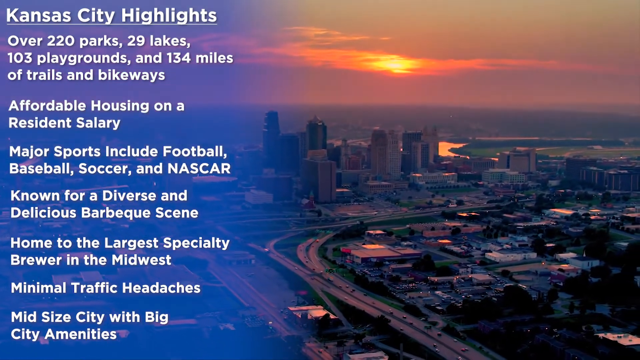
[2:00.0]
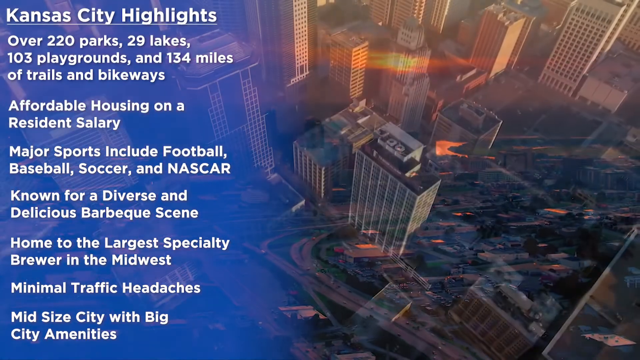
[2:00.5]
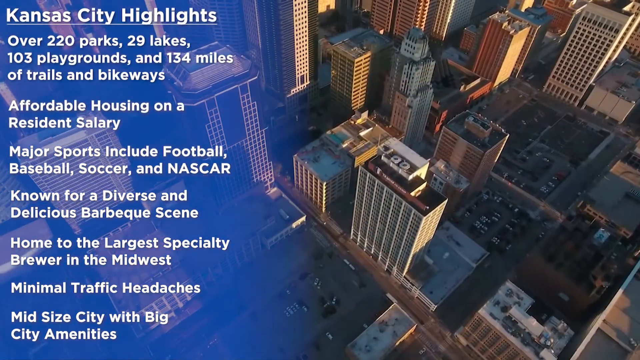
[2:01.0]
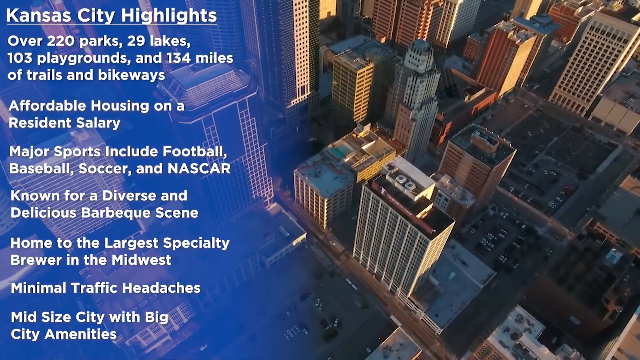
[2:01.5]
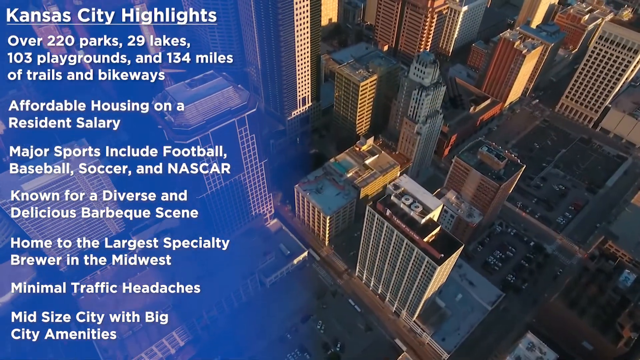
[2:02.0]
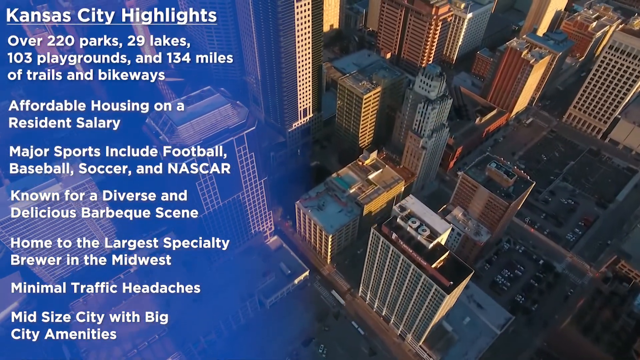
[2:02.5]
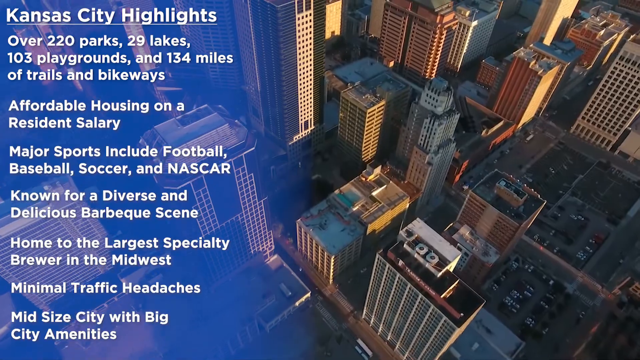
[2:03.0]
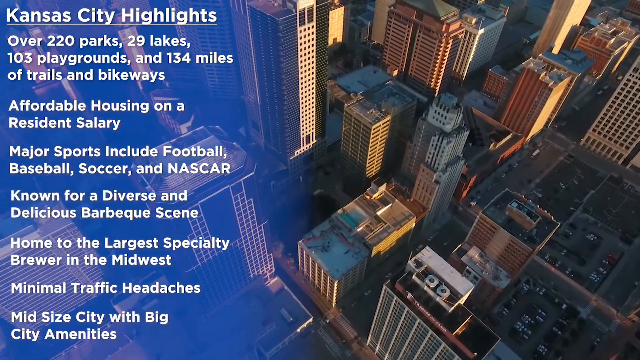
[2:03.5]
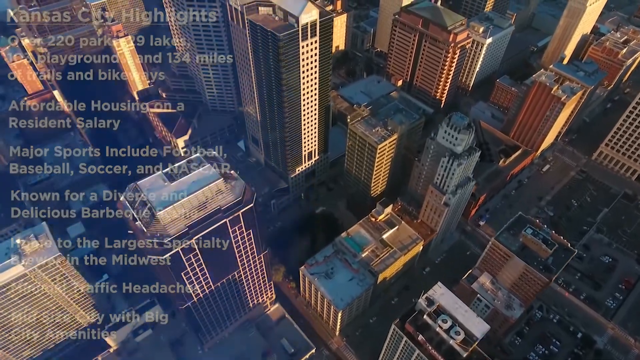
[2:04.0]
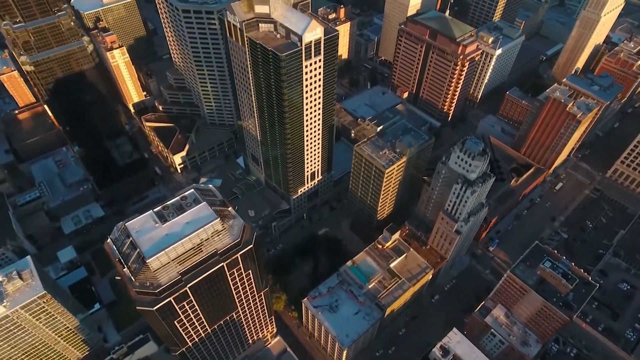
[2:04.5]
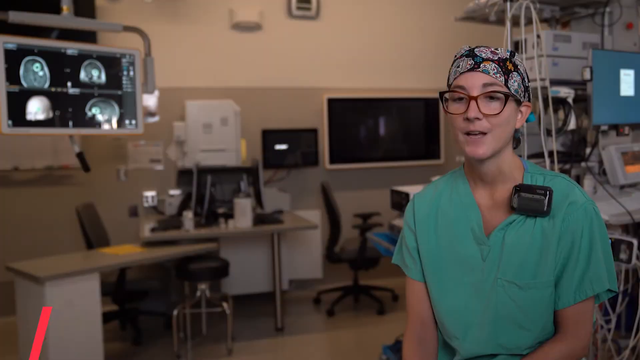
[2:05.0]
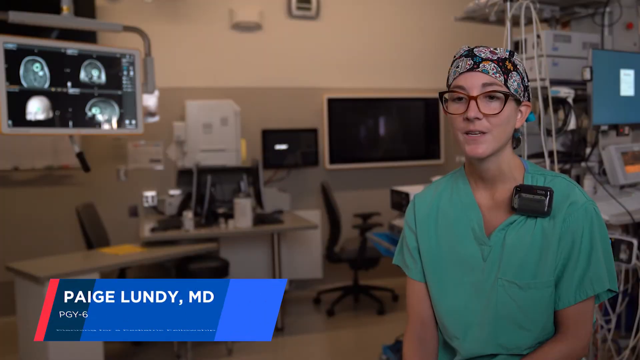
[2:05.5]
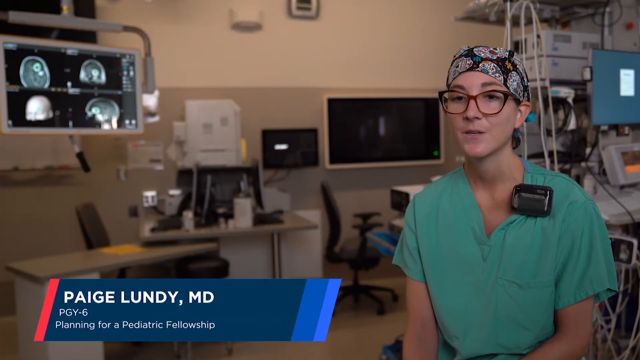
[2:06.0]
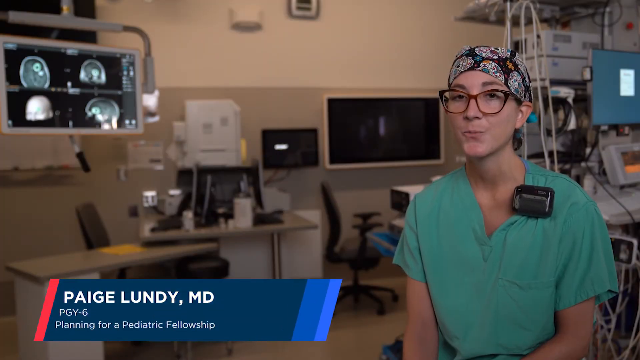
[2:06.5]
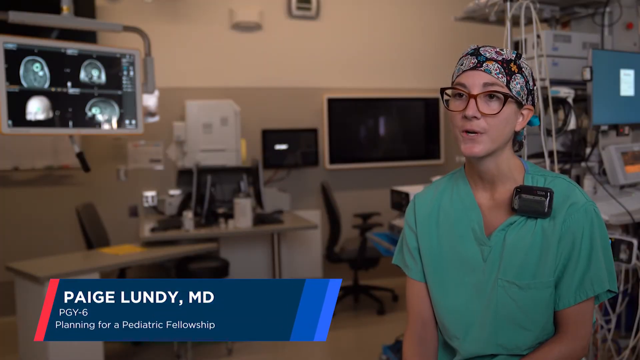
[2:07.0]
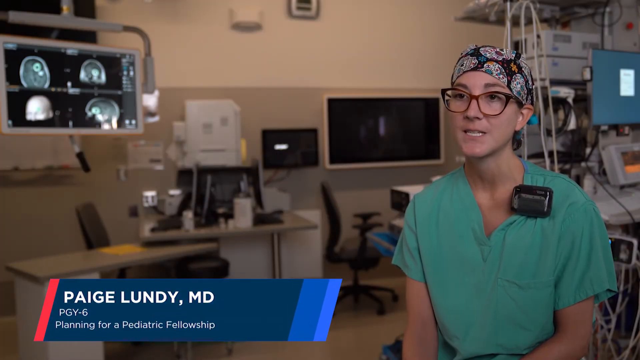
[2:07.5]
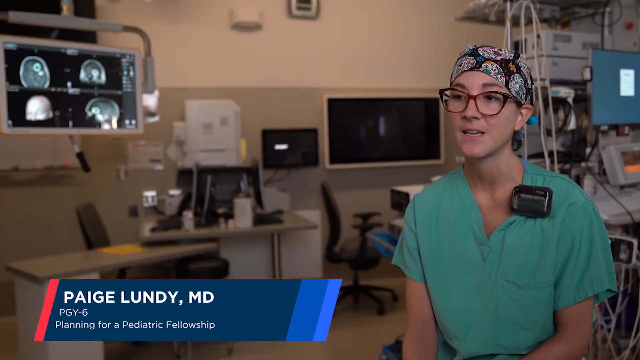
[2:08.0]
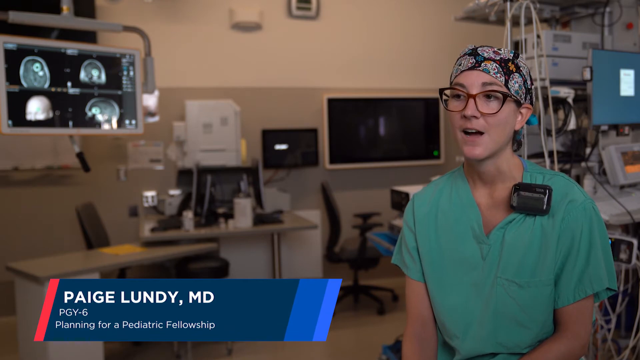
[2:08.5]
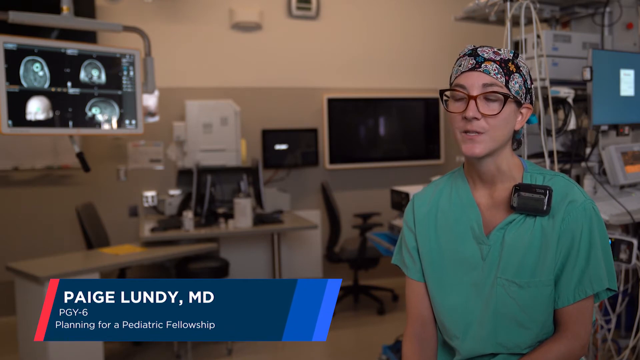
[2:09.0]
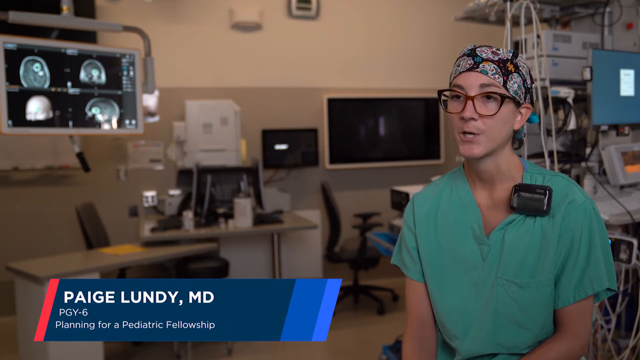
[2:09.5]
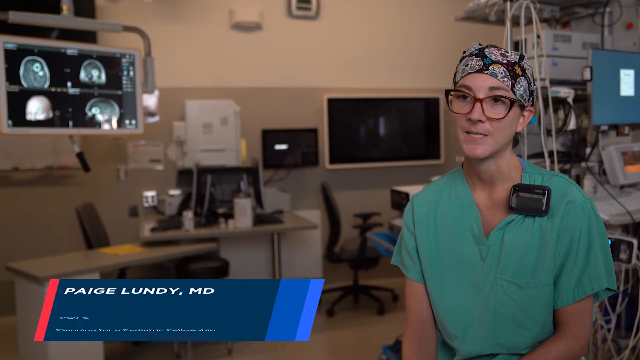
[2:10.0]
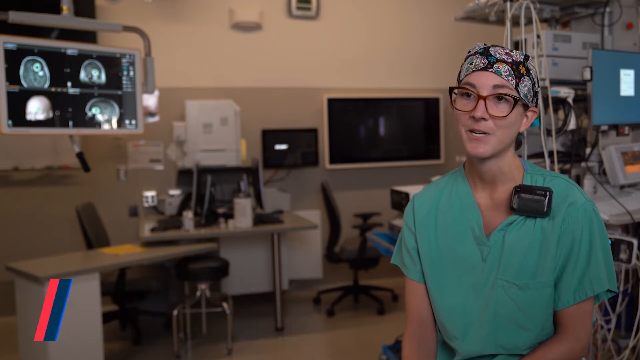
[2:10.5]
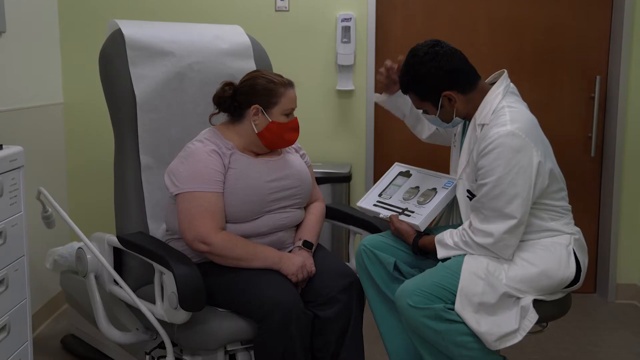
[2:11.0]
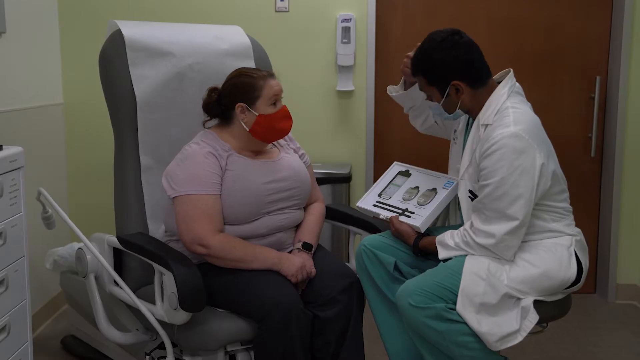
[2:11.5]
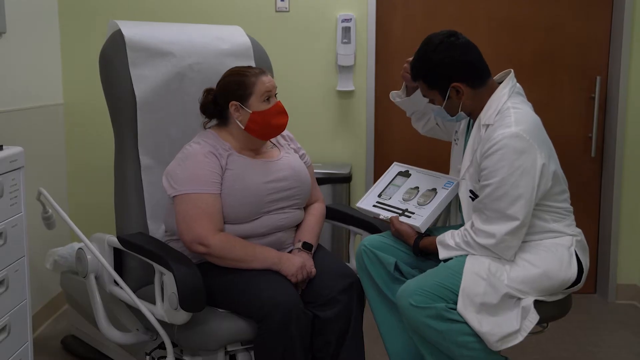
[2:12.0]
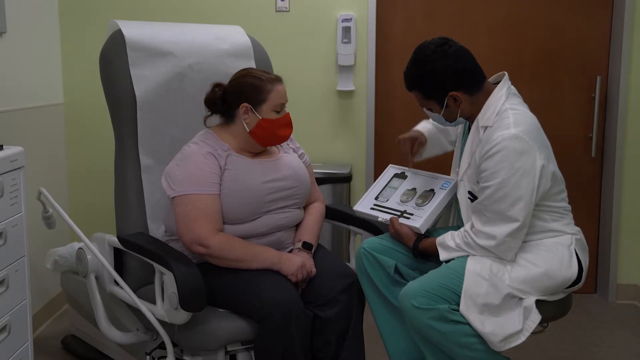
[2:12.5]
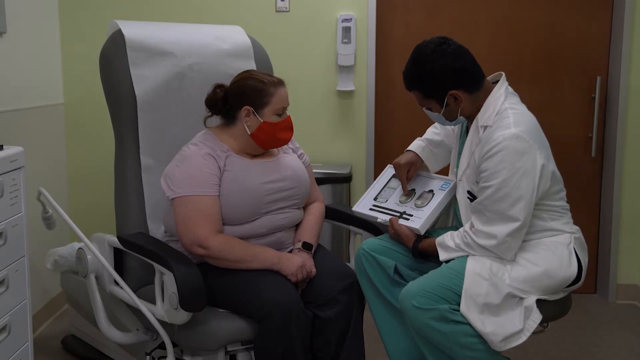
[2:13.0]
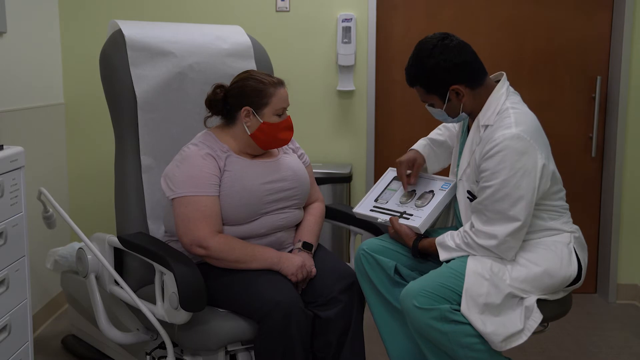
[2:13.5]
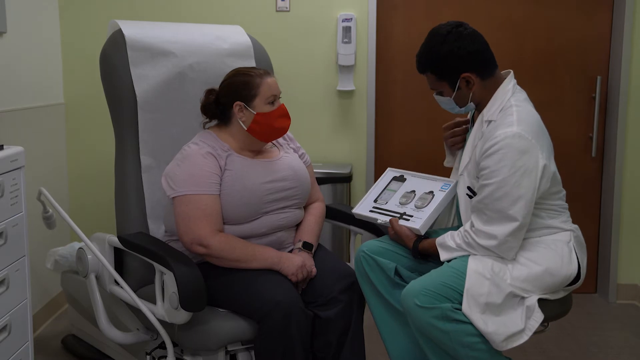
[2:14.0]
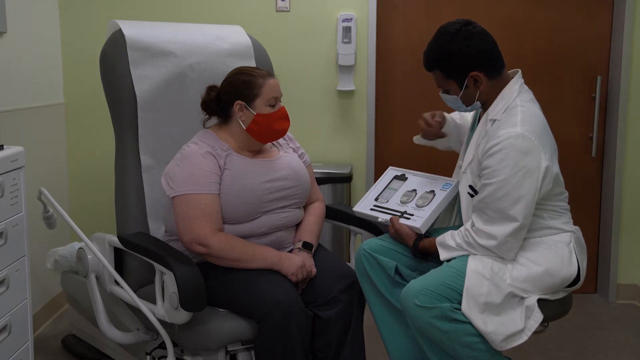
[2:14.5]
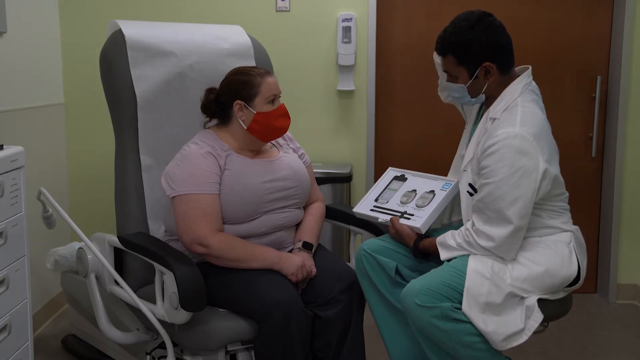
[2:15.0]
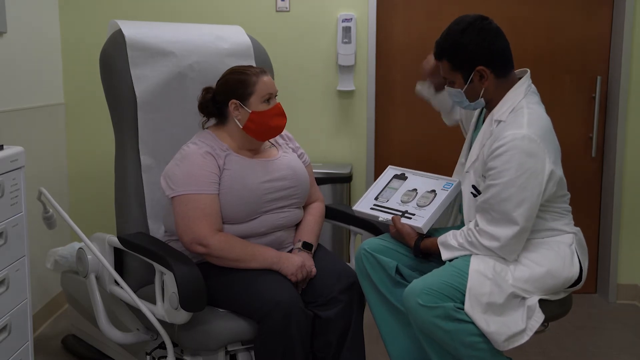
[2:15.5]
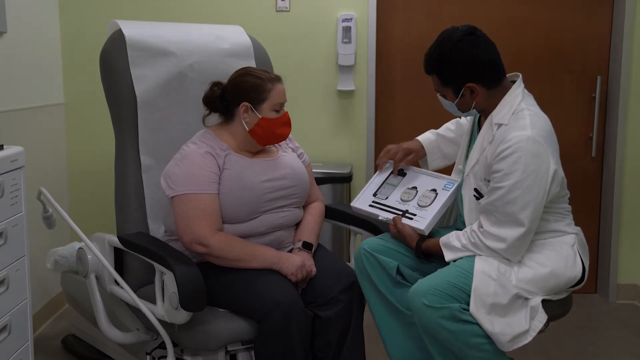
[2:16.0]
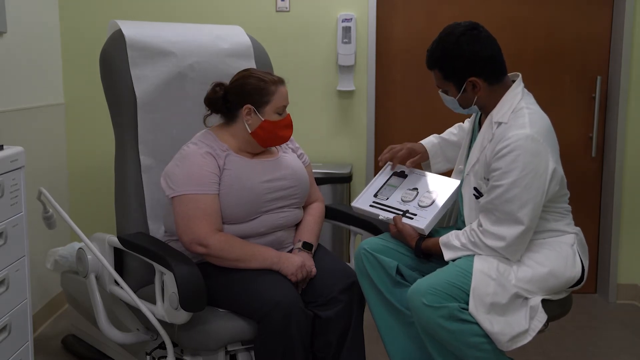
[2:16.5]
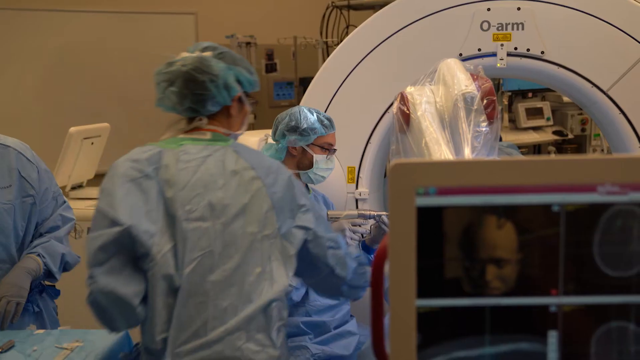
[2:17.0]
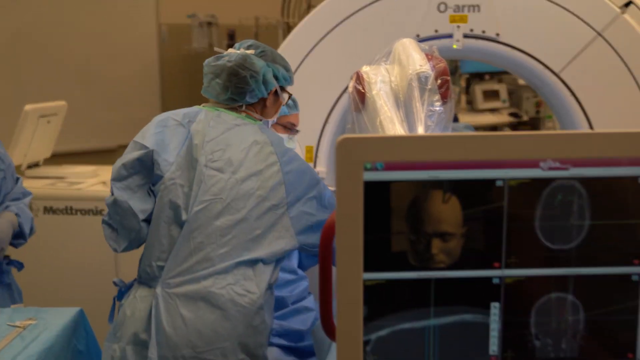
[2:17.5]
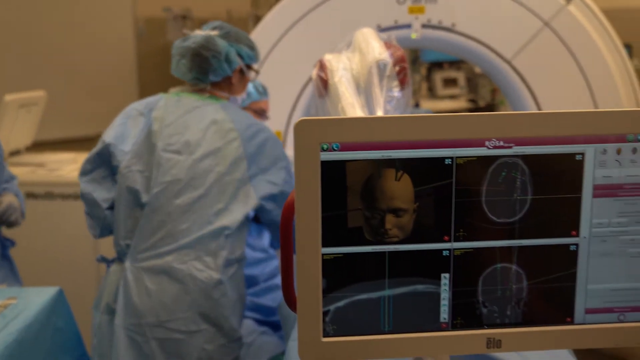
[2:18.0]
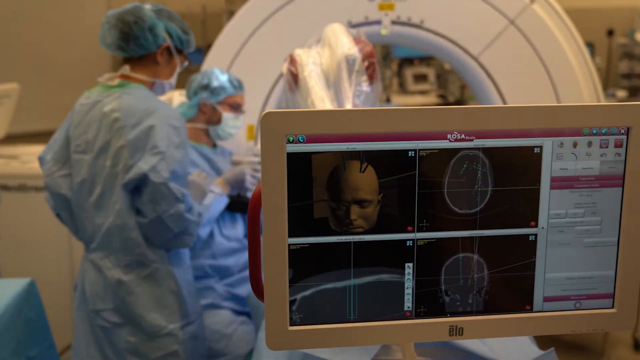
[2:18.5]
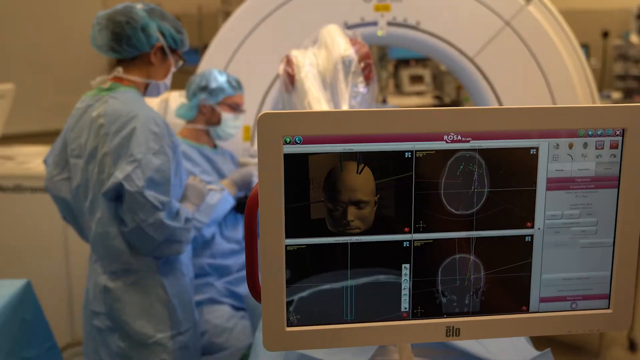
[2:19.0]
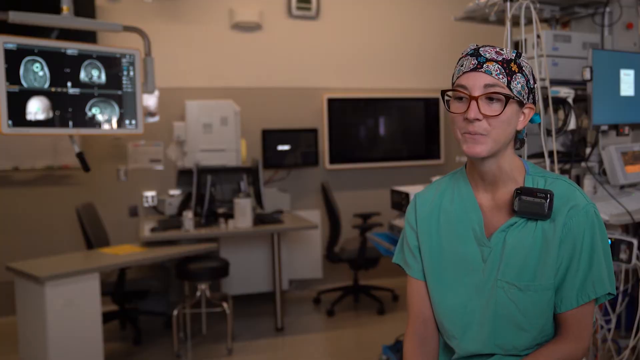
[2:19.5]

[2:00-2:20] On the left side, white bold text reads "Kansas City highlights" on a lightly transparent blue background, with text such as "over 220 parks, 29 lakes, 103 playgrounds, and 134 miles of trails and bikeways", affordable housing, major sports including baseball, soccer and NASCAR, "known for a diverse delicious barbecue scene", "home to the largest specialty brewery in the Midwest", "minimal traffic headaches" and a mid-sized city with big city amenities. In the background, an aerial view slowly moves over the city, showing large, mostly grayish buildings. The scene changes to a white woman sitting on the right side. She wears very large glasses with a sort of reddish color, a playful black doctor's hat covered in white shapes and a greenish blue doctor's shirt, and there is a black device on her left collarbone. At the bottom left her name appears, "Paige Lundy", along with "MD". She talks to people off camera with her hands at her sides, shaking her head a little as she talks. The scene changes to a male doctor on the right side with darker skin and short black hair, talking to a patient. He wears a white jacket and blue-greenish pants; his left hand is on an object and his right hand is sort of on his head, kind of in a scratching motion. On the left is the patient, a woman in a pinkish purple shirt, black pants and a red face mask, looking directly at the doctor sitting in the chair. The doctor's right hand points toward the object he is holding as the woman looks at him, then he puts his hand on his chest and raises it up before pointing to different parts of the object.